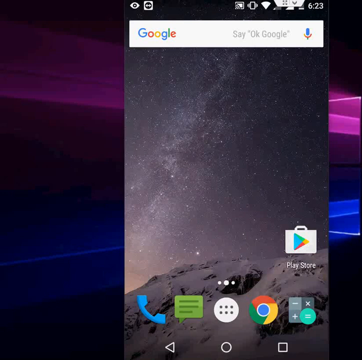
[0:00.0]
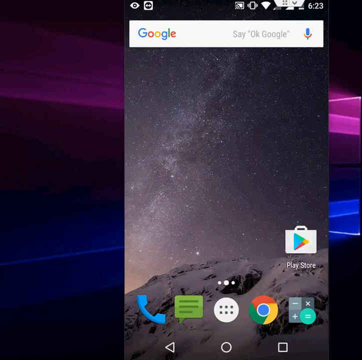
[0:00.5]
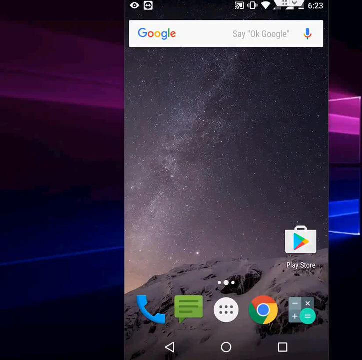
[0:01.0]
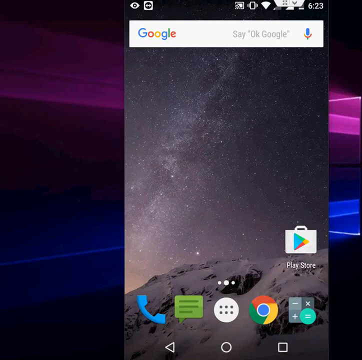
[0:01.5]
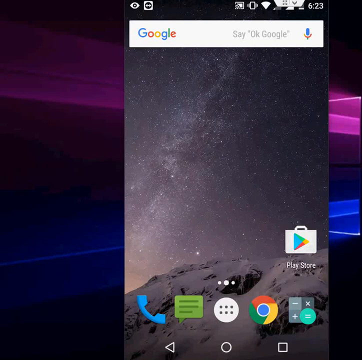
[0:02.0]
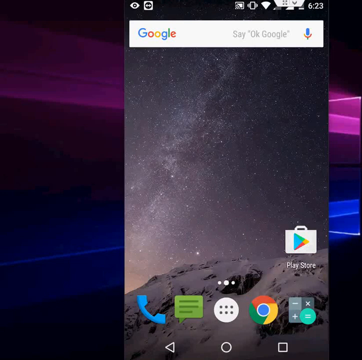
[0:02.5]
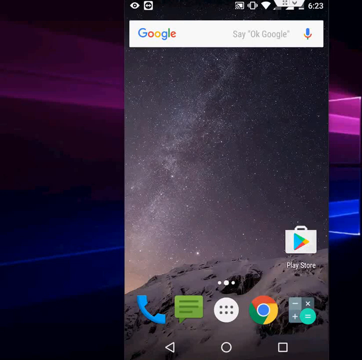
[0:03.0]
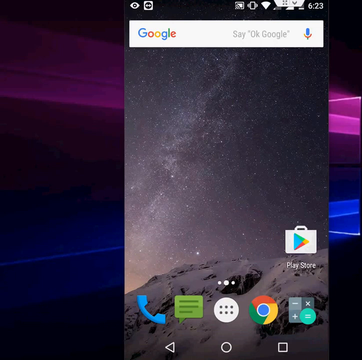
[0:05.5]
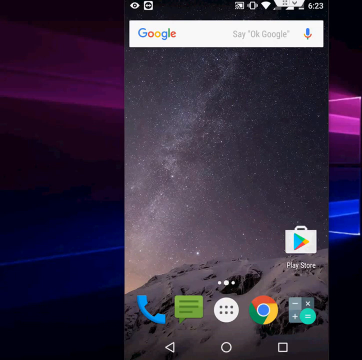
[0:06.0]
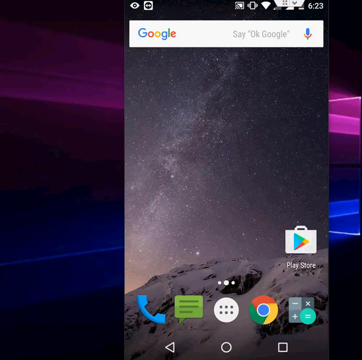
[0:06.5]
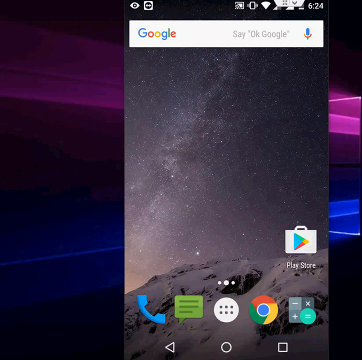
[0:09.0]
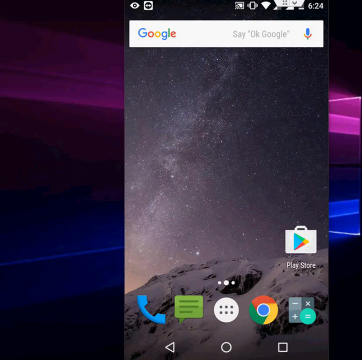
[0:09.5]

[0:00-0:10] An Android phone's home screen is shown with a bunch of apps on it, including the Play Store, a phone icon, a message icon, a Google Chrome icon and a calculator. The background picture looks like outer space; it looks very snowy, with what look like stars in the sky. A Google Chrome search bar is at the top, and an icon button in the middle expands to more apps. Nothing is clicked and nothing changes.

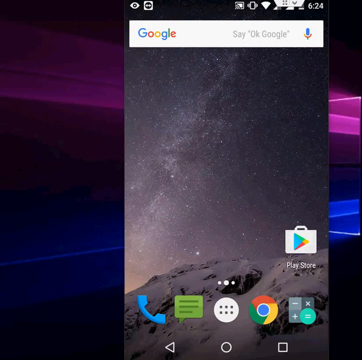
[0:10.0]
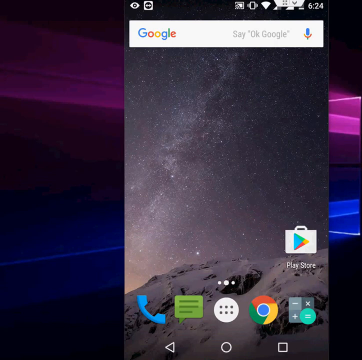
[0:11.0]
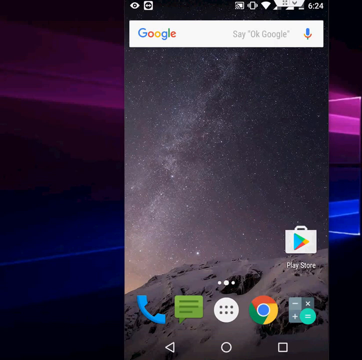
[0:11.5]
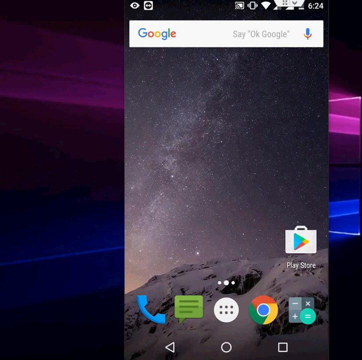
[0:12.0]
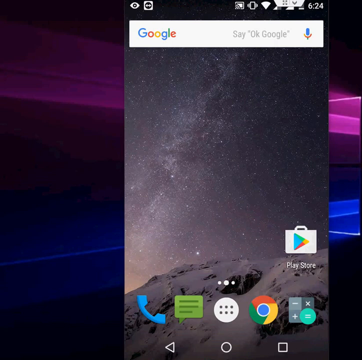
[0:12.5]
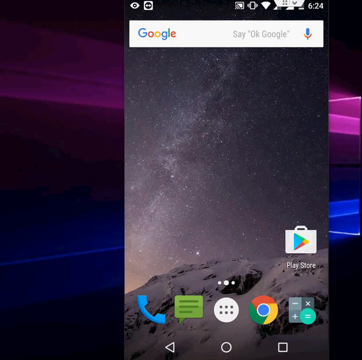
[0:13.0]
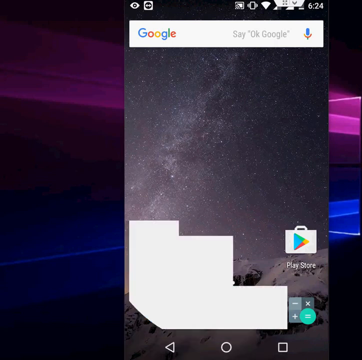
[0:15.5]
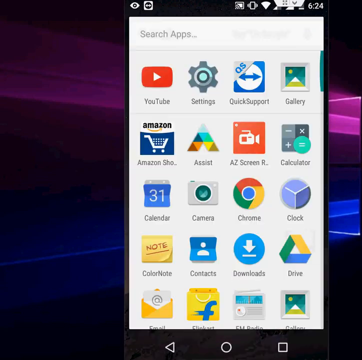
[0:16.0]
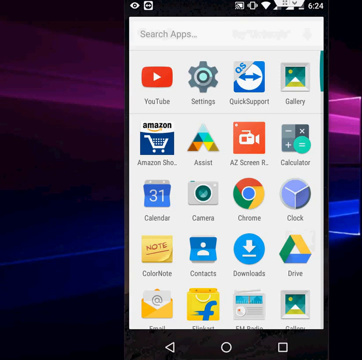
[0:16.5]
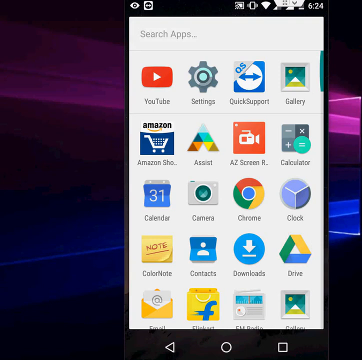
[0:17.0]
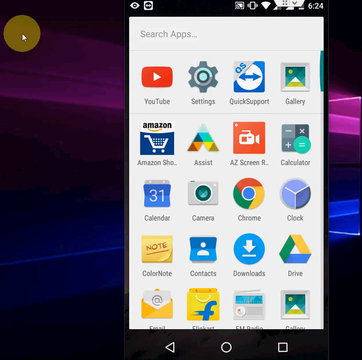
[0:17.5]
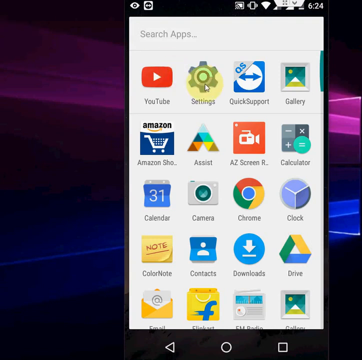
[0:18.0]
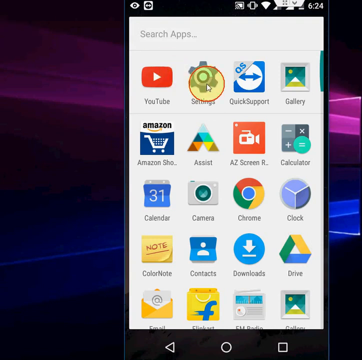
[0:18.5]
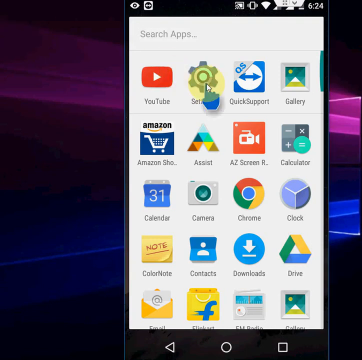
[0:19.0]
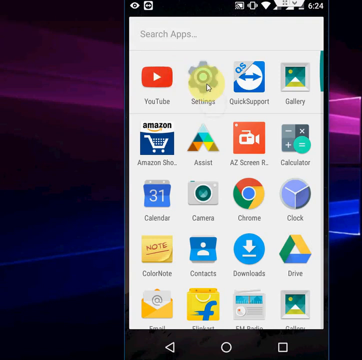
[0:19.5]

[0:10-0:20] The middle button on the phone is clicked, opening the rest of the apps: calculator, clock, a notes icon, the Play Store, a Downloads icon, YouTube and Amazon. Settings is then clicked.